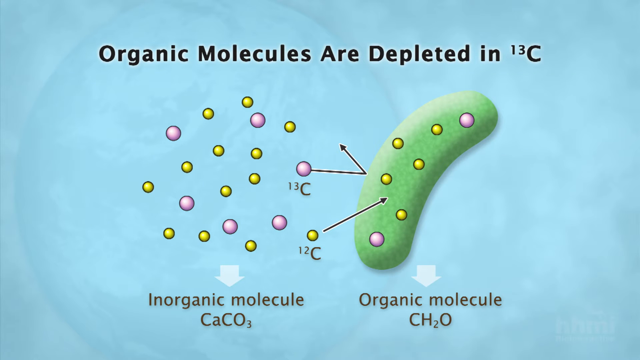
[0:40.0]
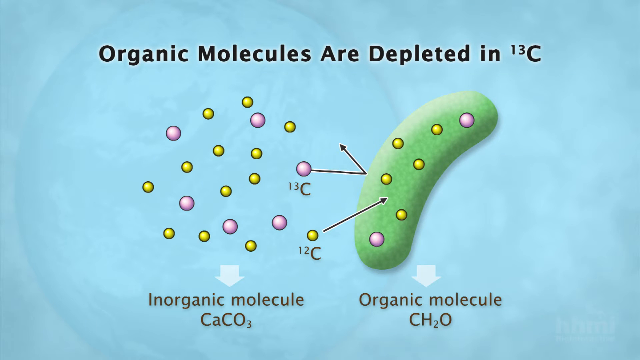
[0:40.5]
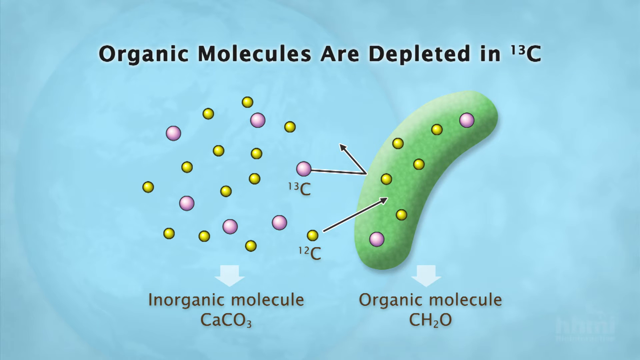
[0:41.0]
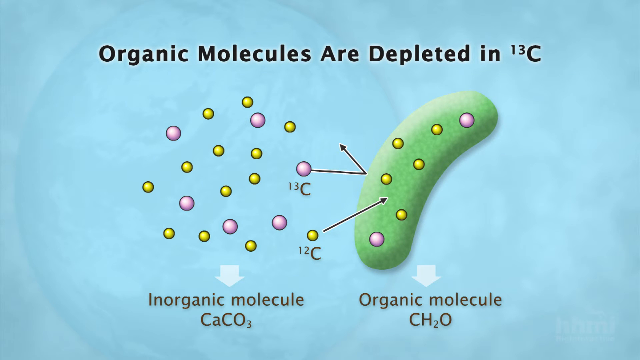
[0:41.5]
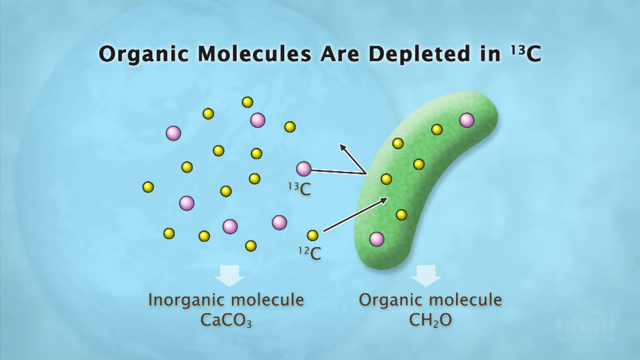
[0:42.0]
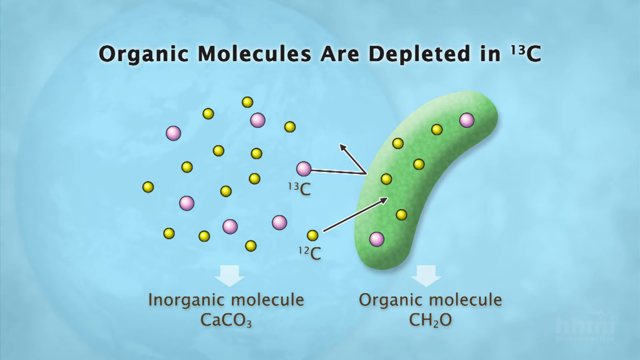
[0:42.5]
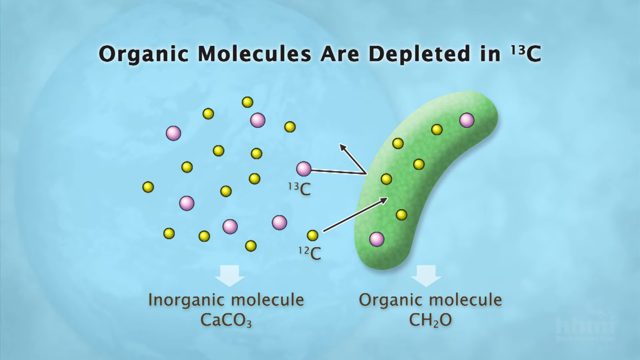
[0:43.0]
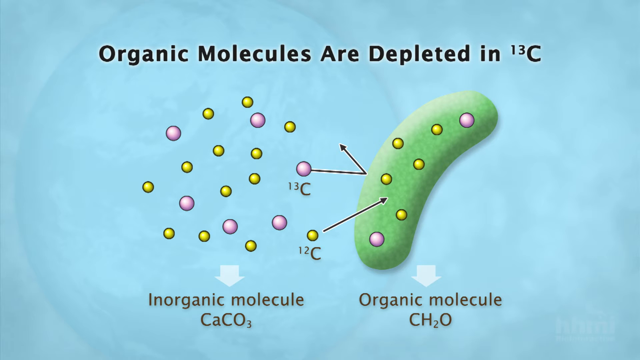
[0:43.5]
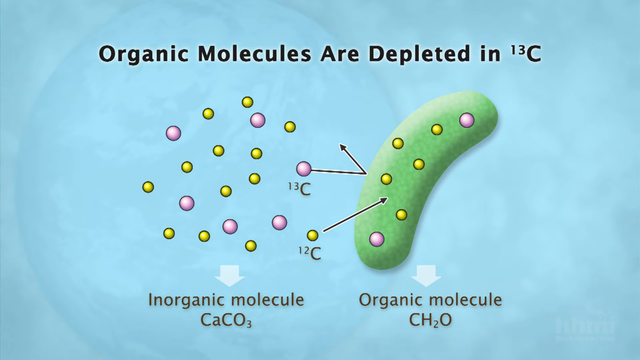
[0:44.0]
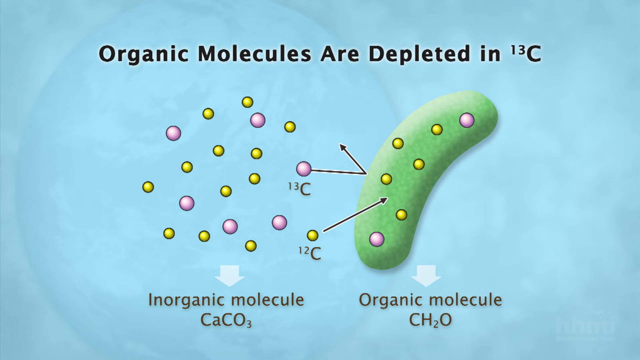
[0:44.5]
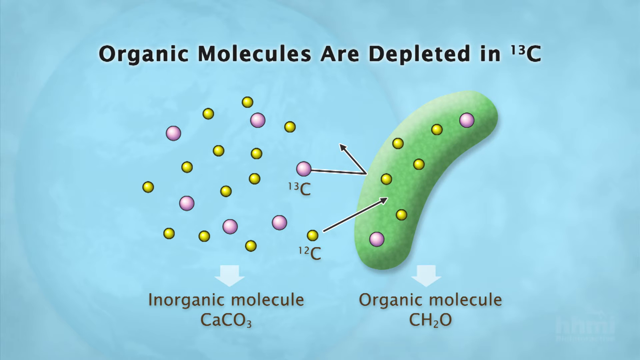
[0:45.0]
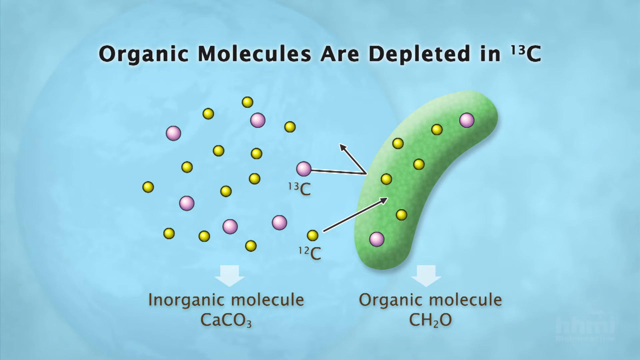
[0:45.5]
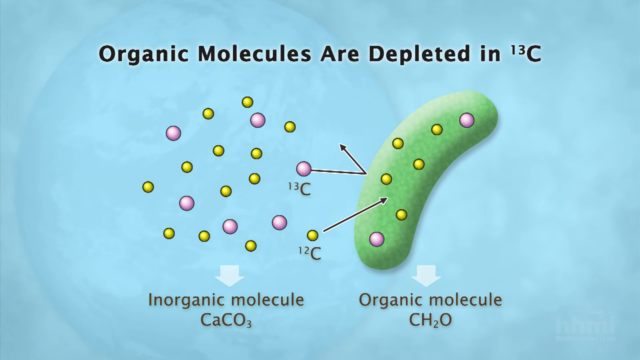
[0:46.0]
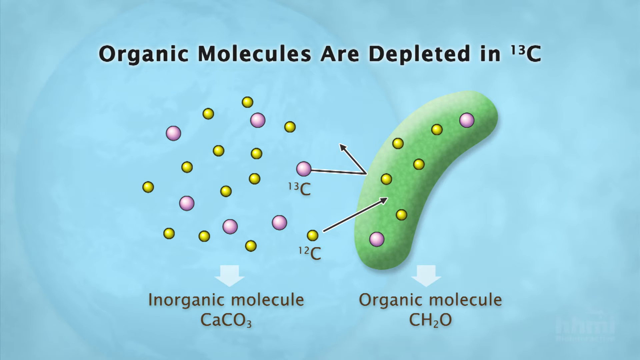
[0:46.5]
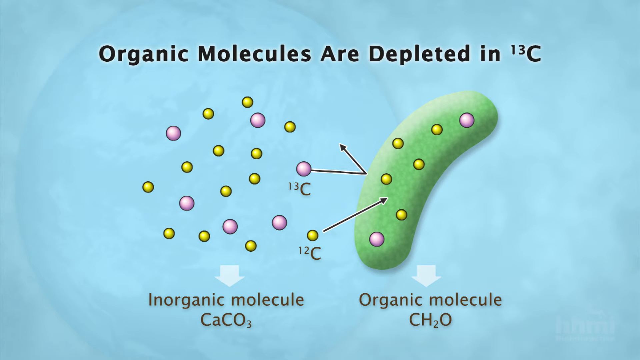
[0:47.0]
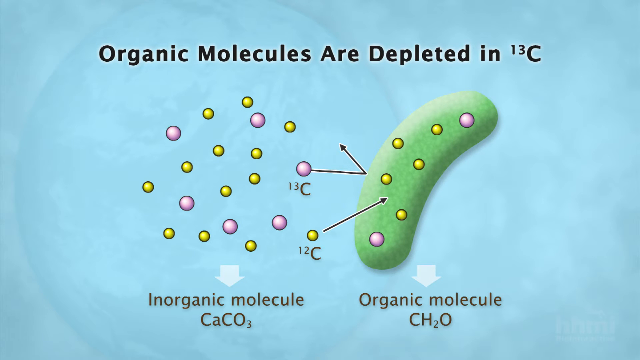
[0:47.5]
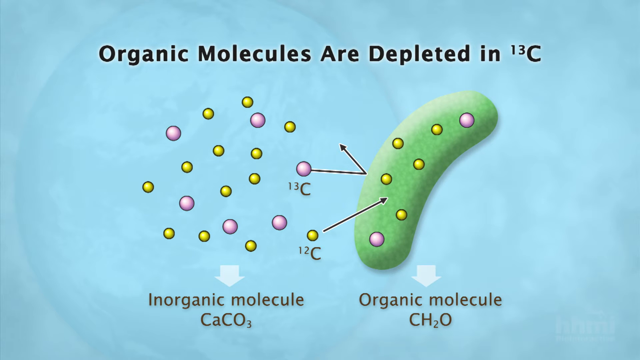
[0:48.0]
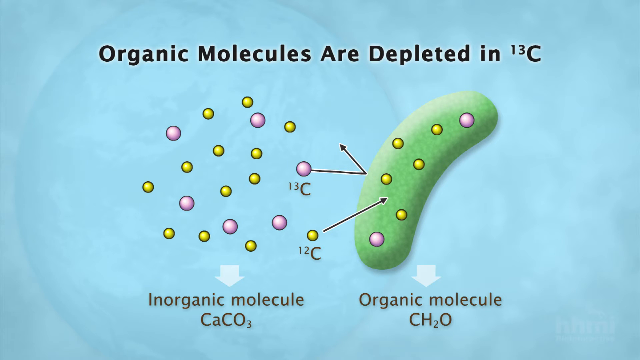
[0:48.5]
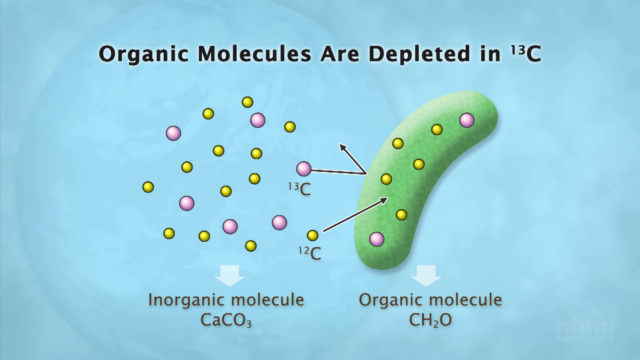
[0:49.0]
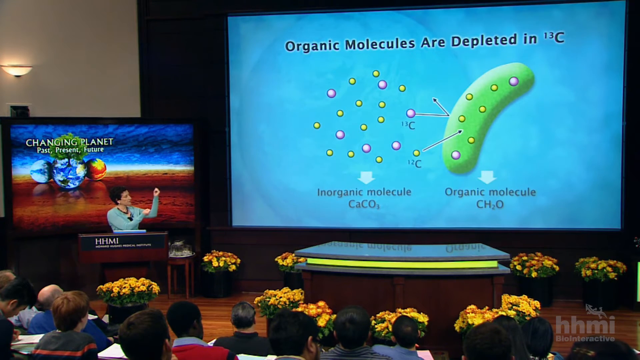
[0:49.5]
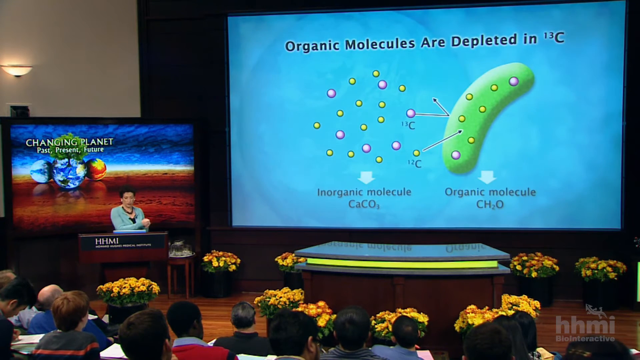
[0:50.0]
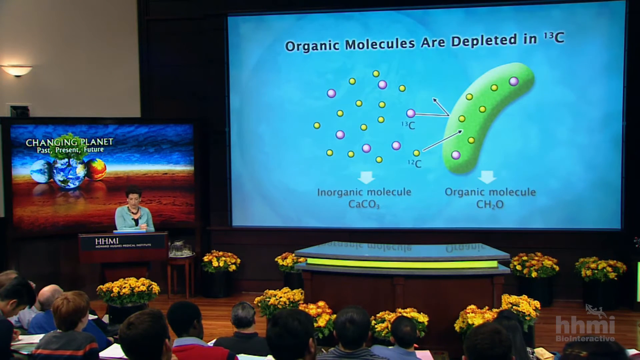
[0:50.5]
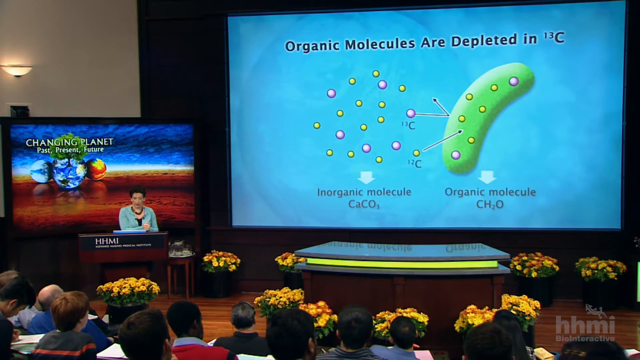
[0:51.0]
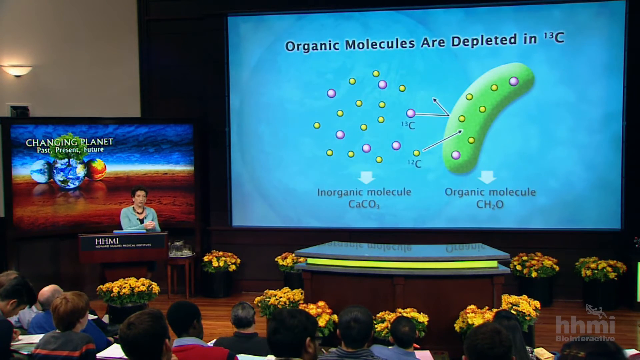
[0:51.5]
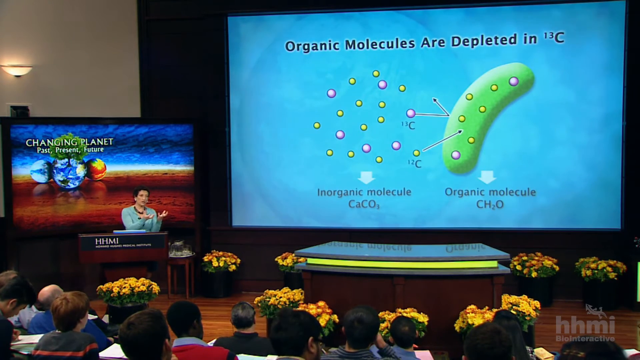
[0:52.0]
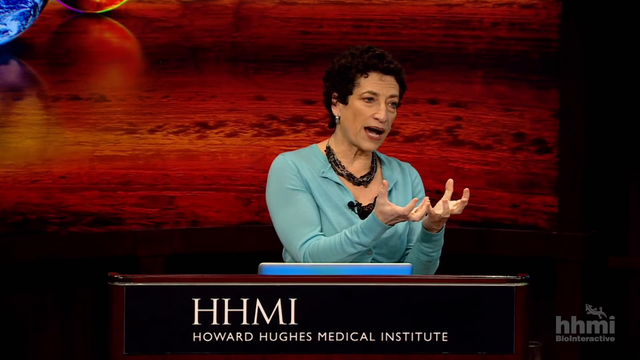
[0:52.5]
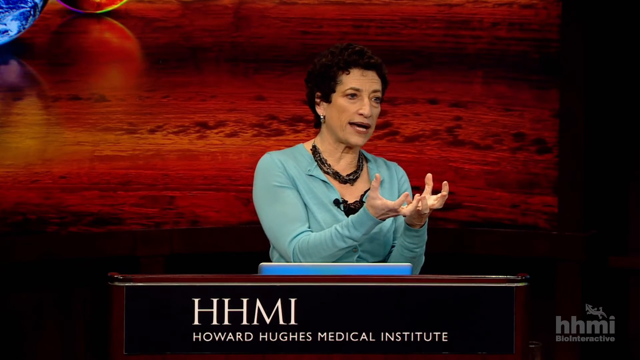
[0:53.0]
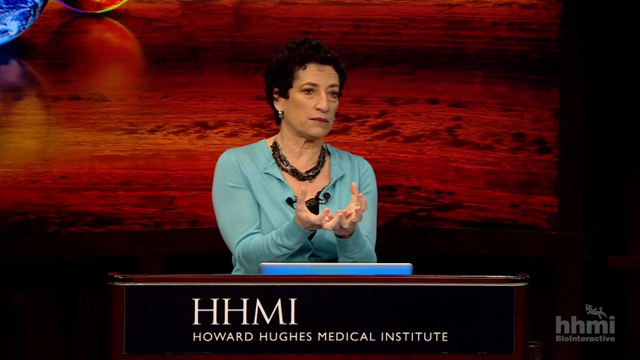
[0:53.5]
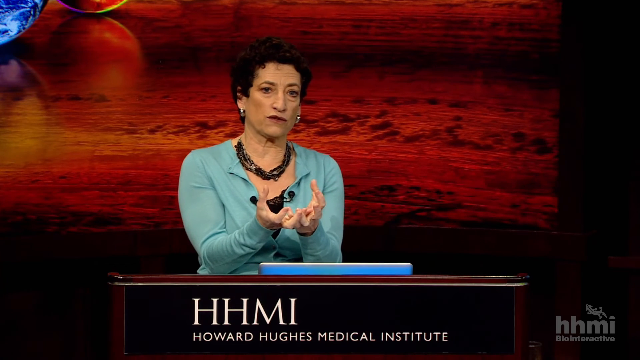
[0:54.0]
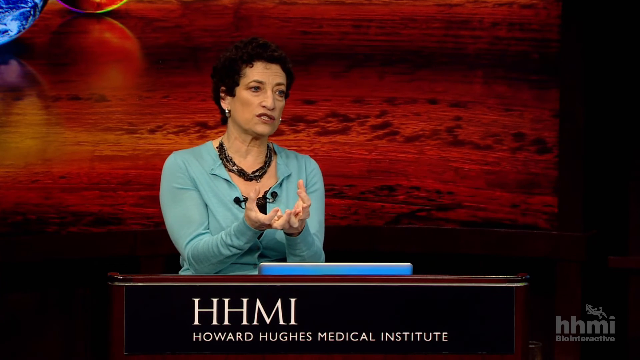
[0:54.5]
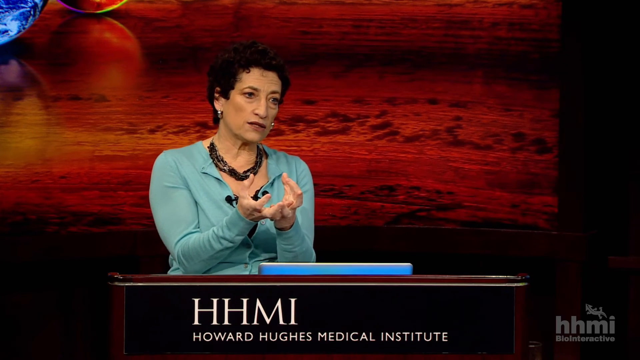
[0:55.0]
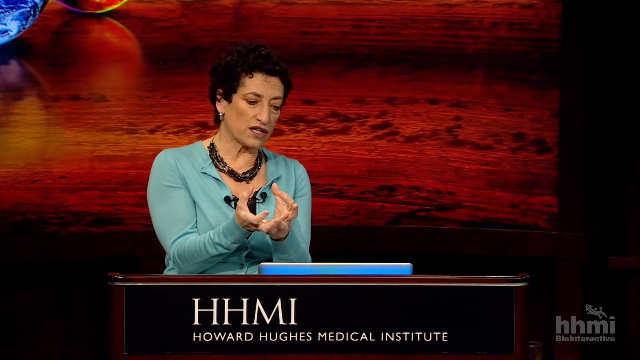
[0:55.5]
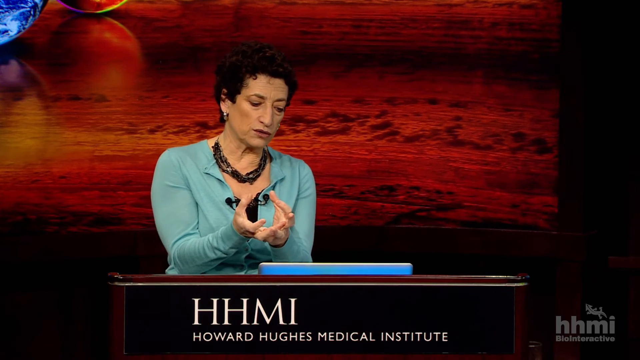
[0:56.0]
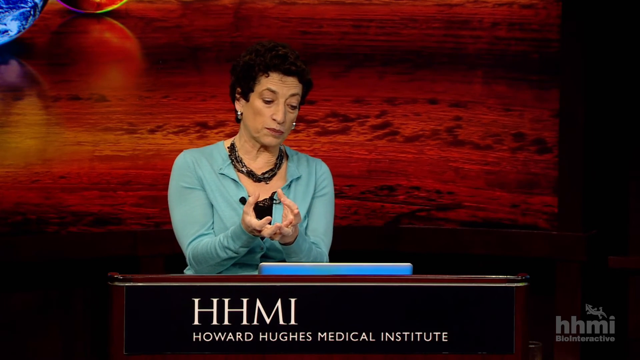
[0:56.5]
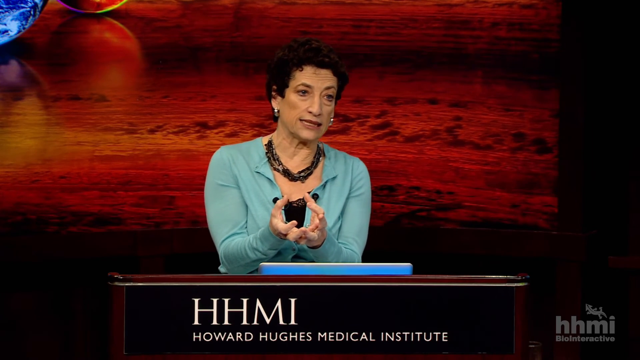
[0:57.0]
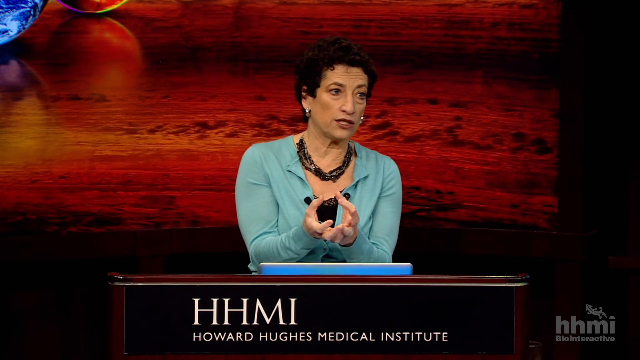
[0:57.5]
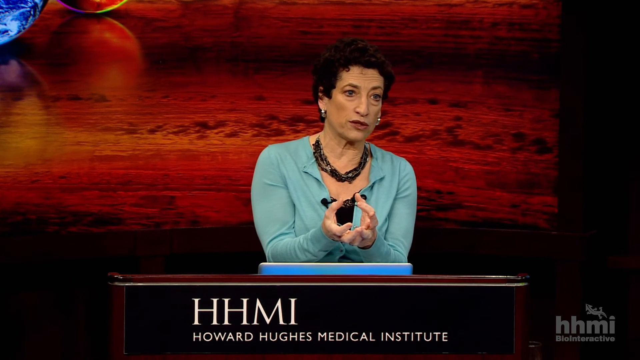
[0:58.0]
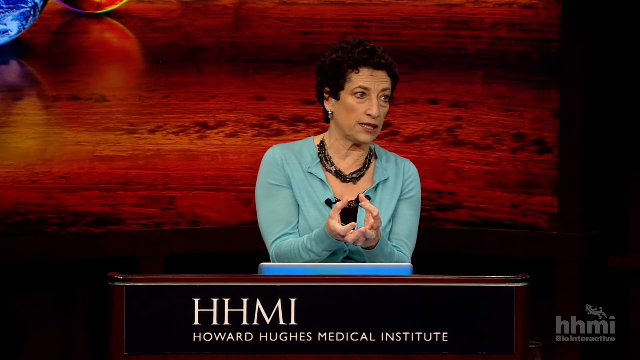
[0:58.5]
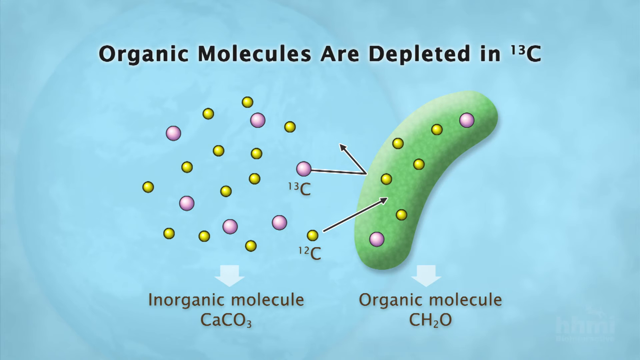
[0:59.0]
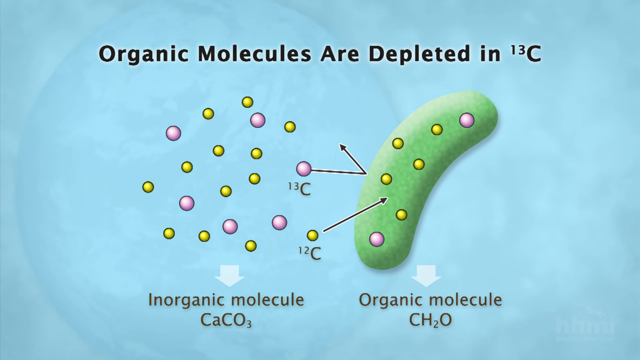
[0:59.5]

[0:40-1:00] The diagram that says "organic molecules are depleted in 13C" remains on screen. Below are illustrations of what are supposed to be molecules, shown as pink and yellow dots, and a larger structure that looks to be shaped like a cucumber or pickle, with arrows from the molecules pointing at it. It says "inorganic molecule CaCO3" and next to that "organic molecule CH2O." The camera then pulls out to a larger view of the speaking engagement: the woman stands at a podium, speaking, with the HHMI logo behind her. Her backdrop says "changing planet past present future" and has an image of a blue sky and a deep brown landscape with images of planets and trees. To the right, a large slideshow shows the information about molecules.